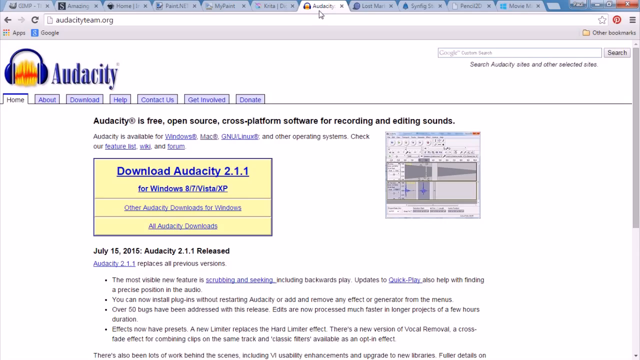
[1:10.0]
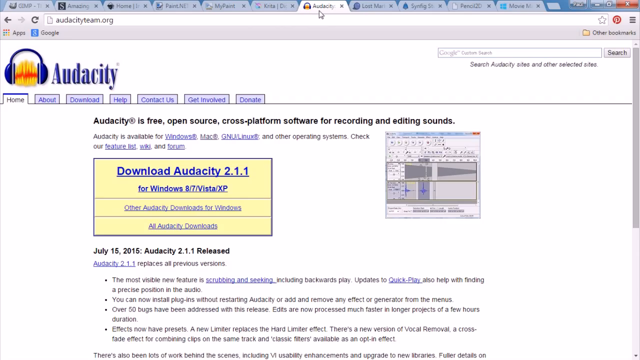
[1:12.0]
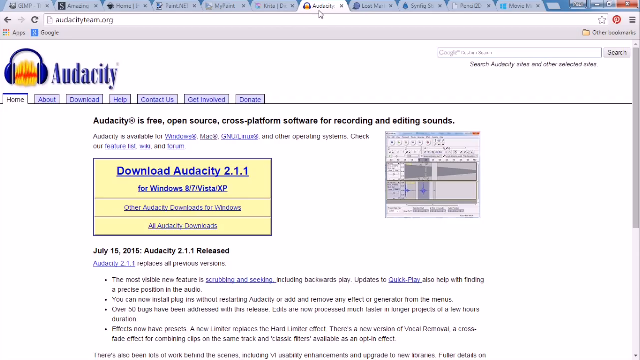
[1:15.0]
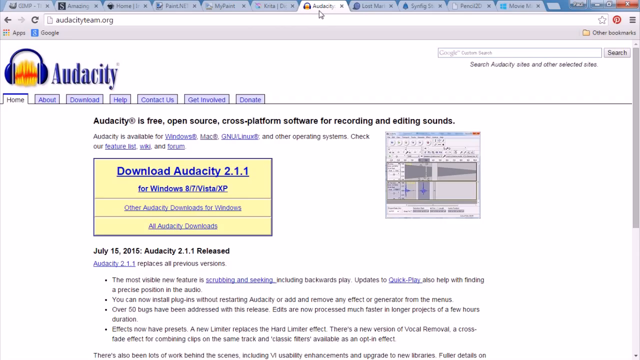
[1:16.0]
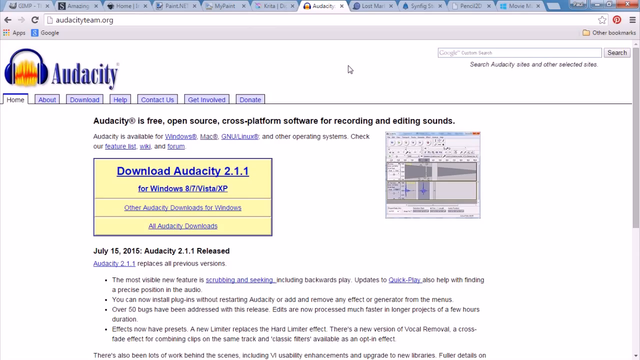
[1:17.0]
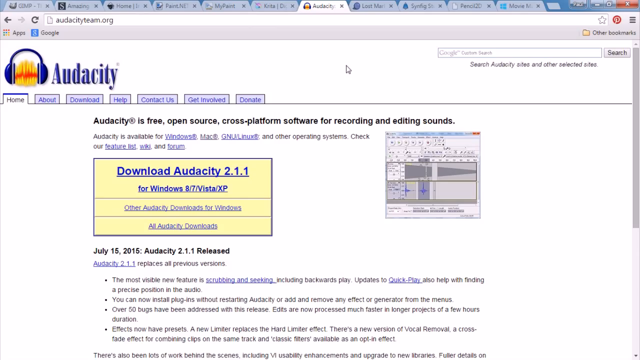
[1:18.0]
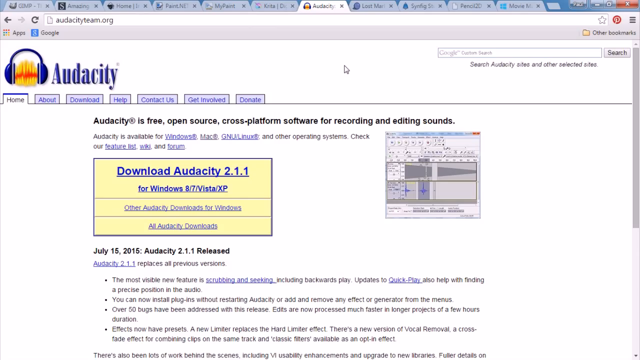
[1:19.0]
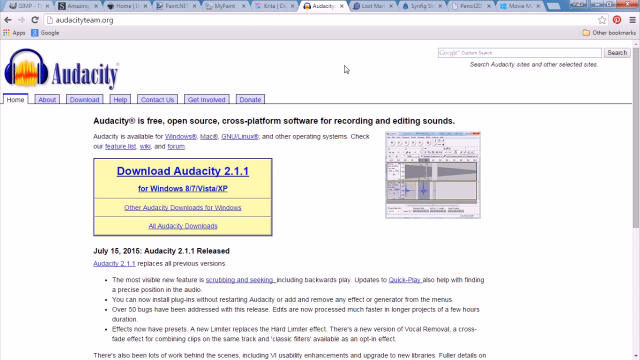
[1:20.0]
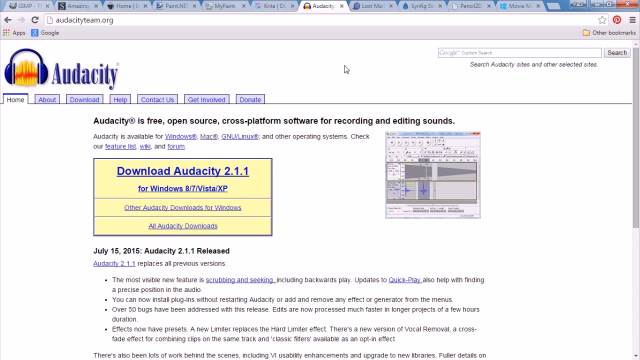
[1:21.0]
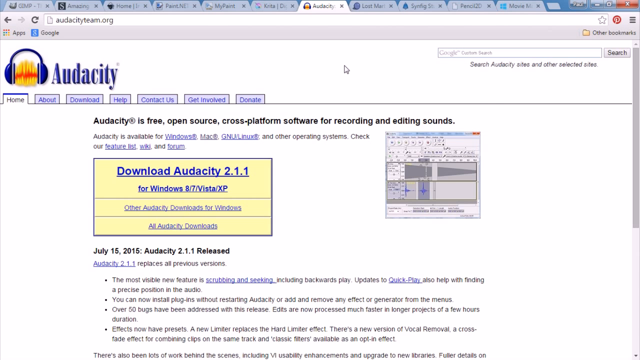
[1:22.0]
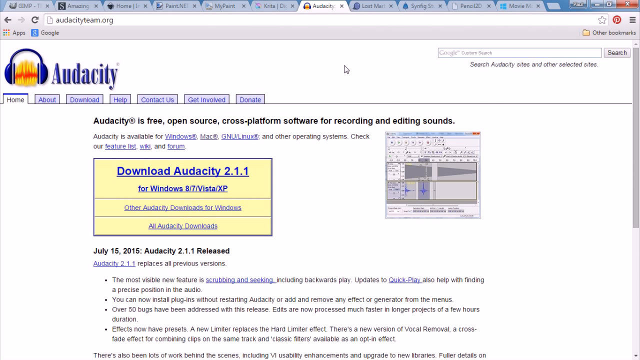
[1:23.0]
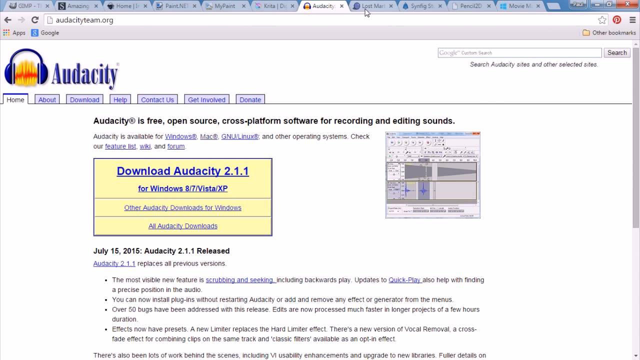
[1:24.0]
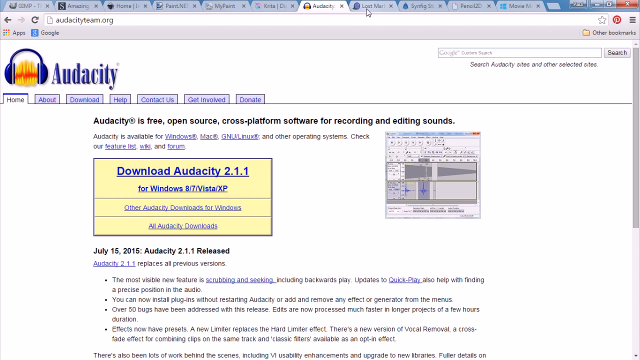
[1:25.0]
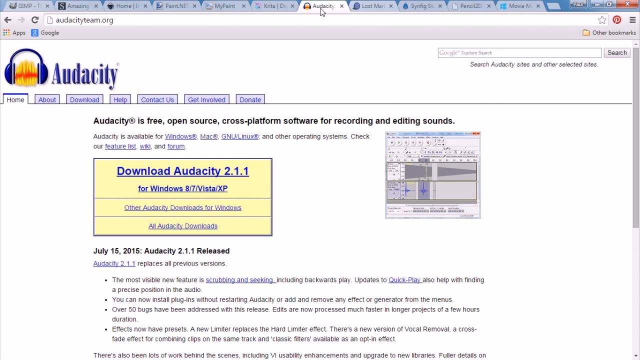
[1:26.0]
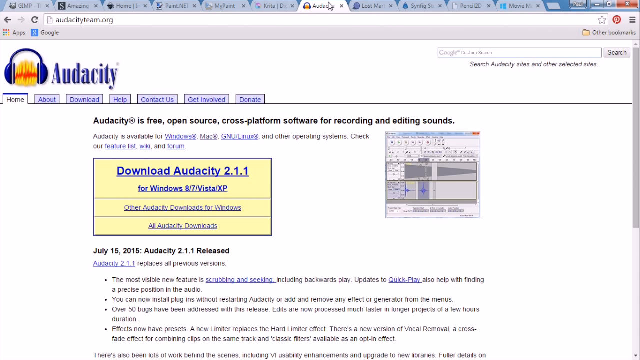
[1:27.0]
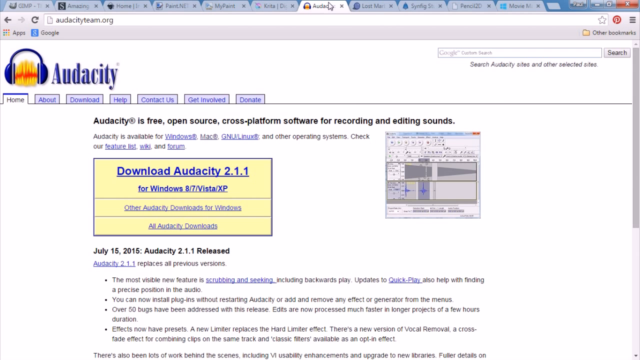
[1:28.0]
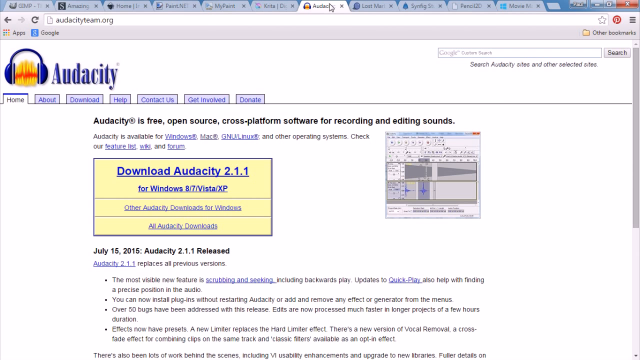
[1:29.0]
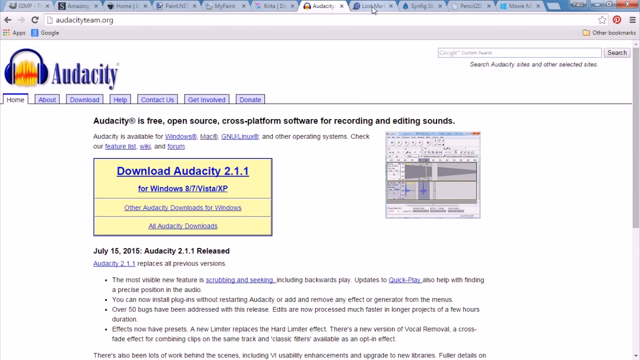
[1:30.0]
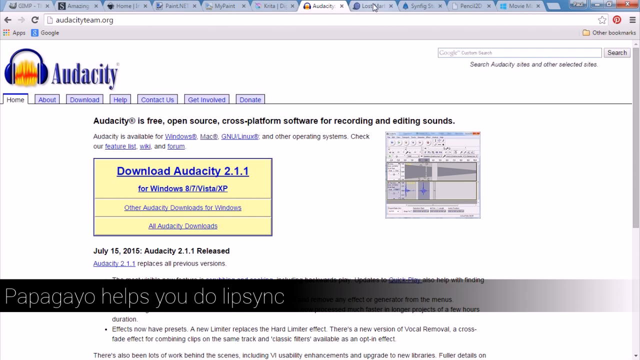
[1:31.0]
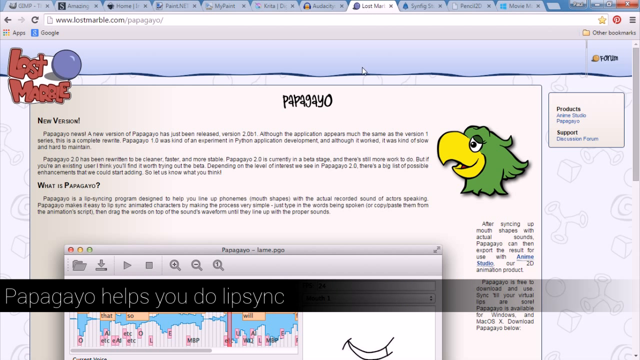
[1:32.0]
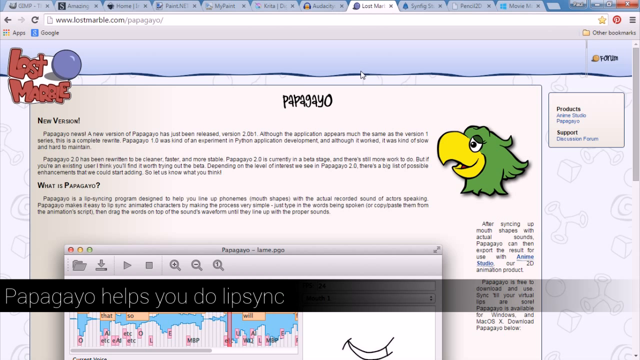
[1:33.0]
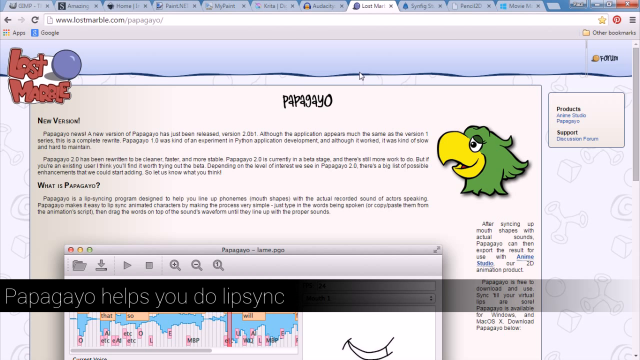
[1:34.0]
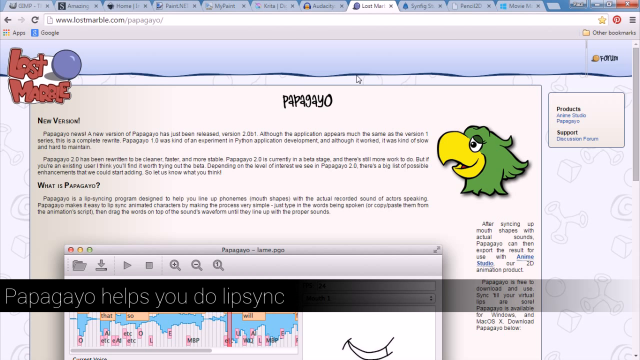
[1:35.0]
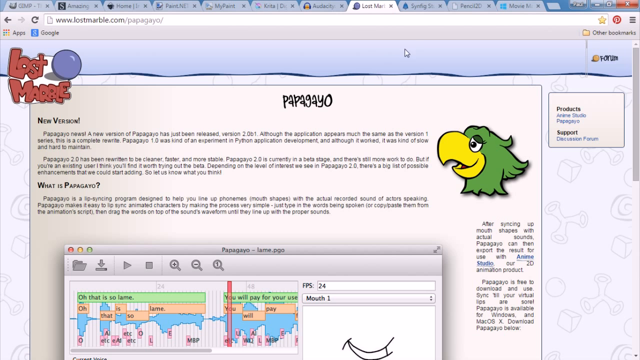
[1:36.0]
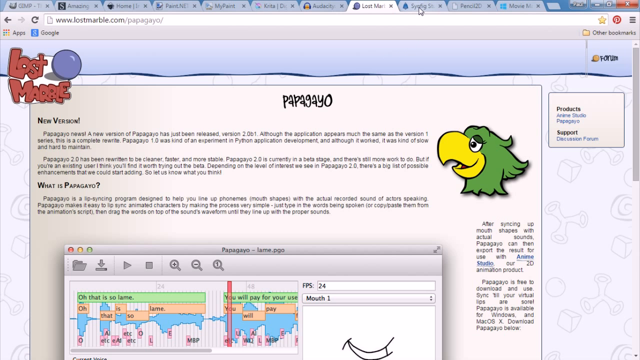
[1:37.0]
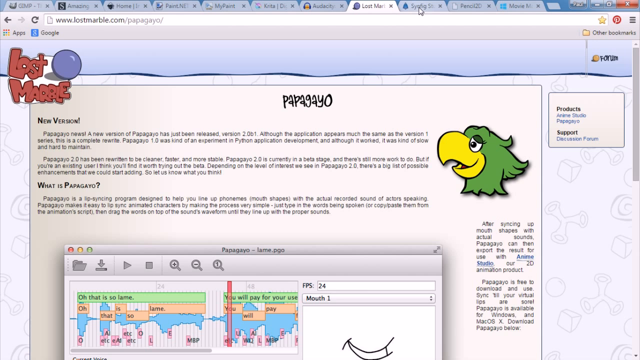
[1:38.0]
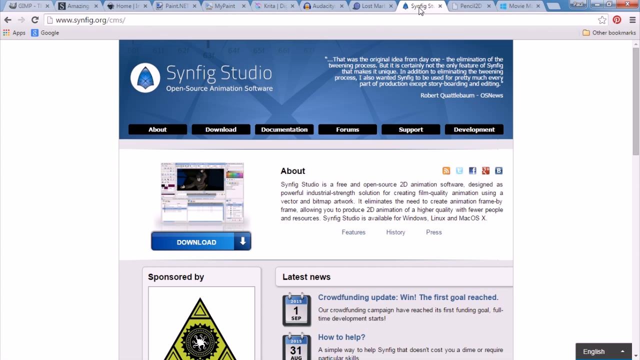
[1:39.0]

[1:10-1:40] The Audacity page remains open. In black bold text, in a font that is not large, it reads "July 15, 2015" and "the 2.1.1 release." The logo looks like blue headphones with wavy sound lines. The page stays up for quite some time. The mouse then moves up, seemingly about to click a tab on the left, but returns to the current tab before clicking the tab on the right. That page appears to say "Lost Marble" in red in the upper left corner, with something like a purple-ish ball. Next comes what looks like a green parrot. The mouse then clicks the next tab, labeled "Synfig."